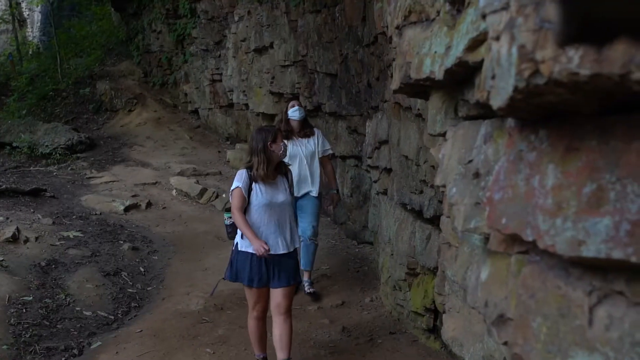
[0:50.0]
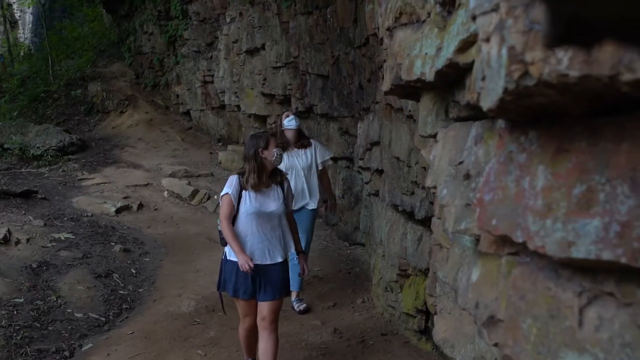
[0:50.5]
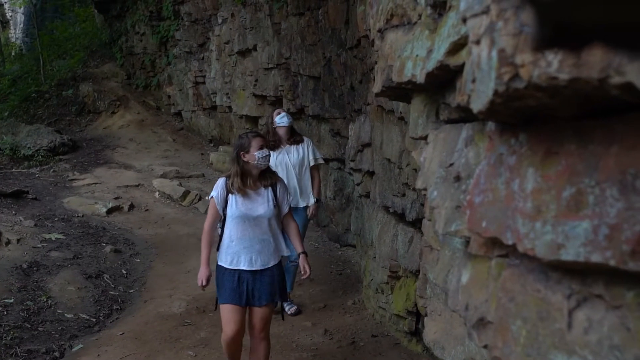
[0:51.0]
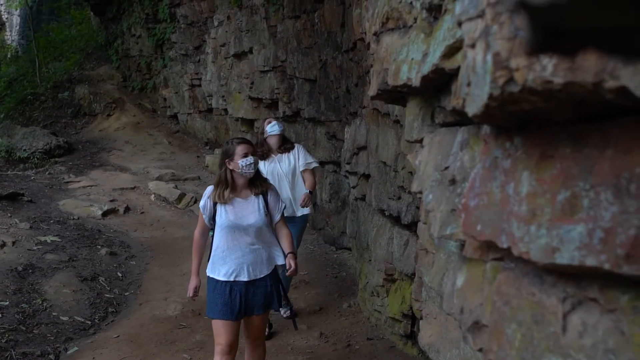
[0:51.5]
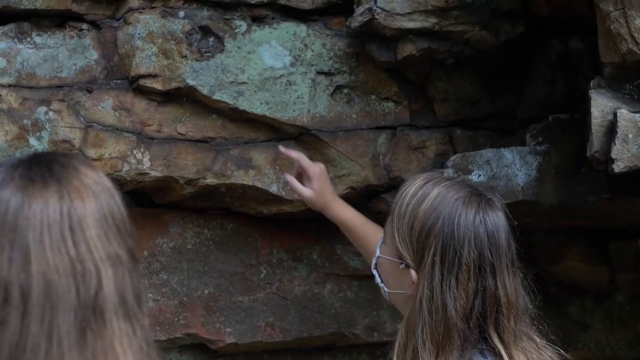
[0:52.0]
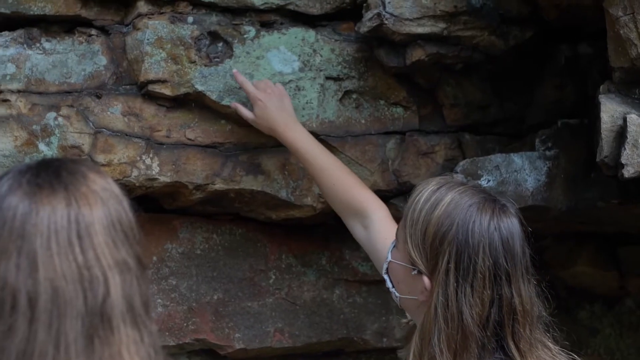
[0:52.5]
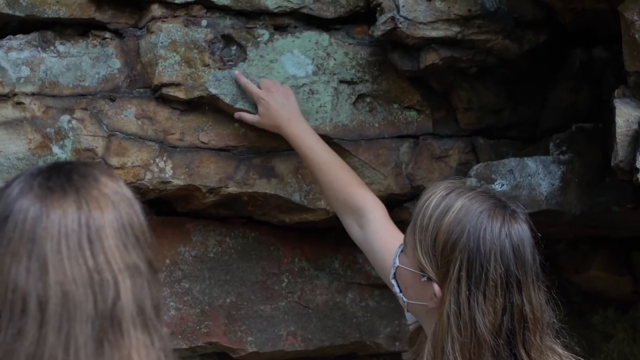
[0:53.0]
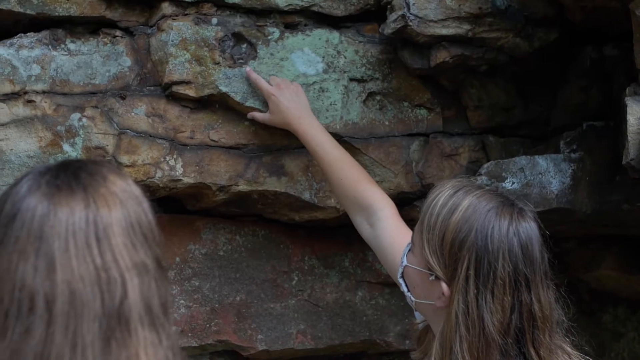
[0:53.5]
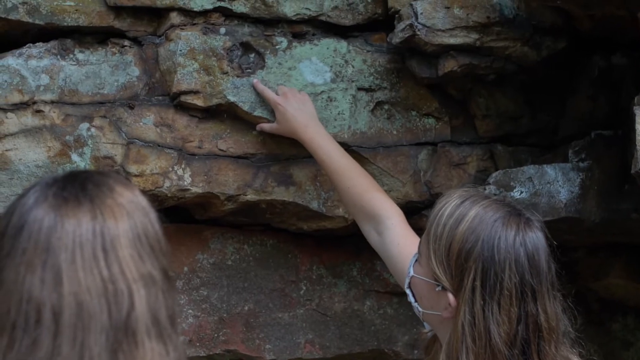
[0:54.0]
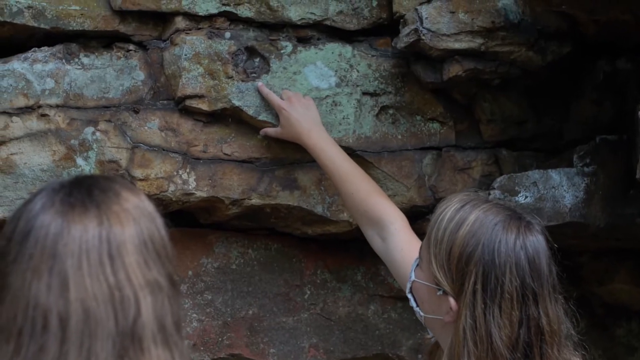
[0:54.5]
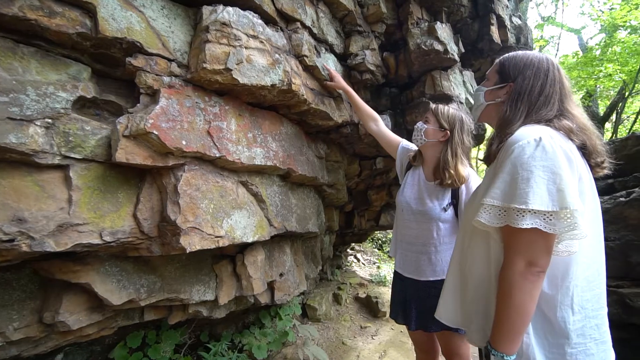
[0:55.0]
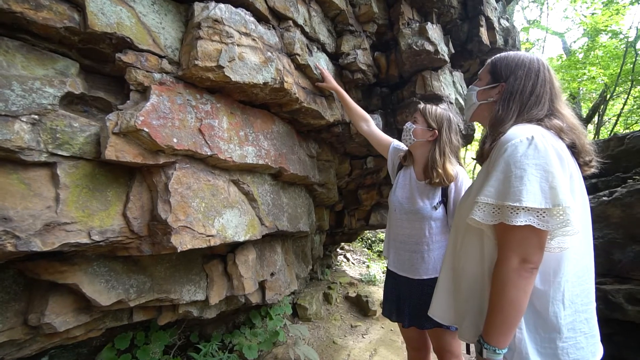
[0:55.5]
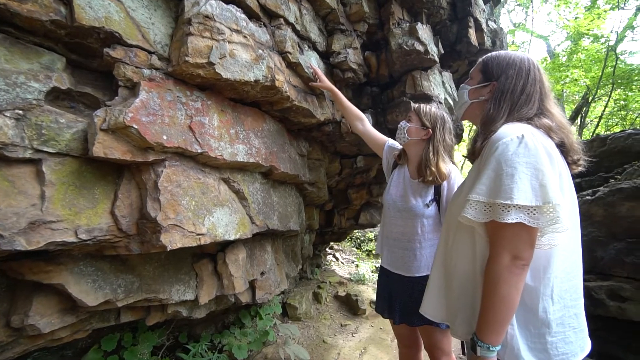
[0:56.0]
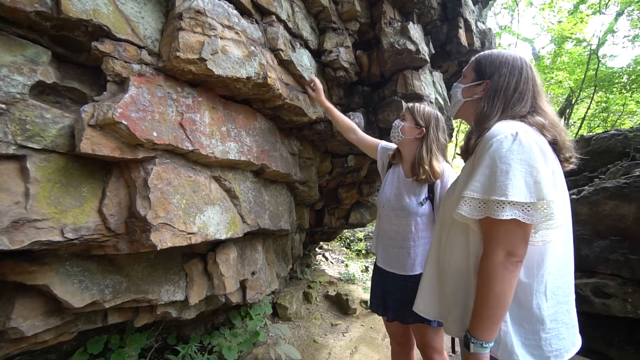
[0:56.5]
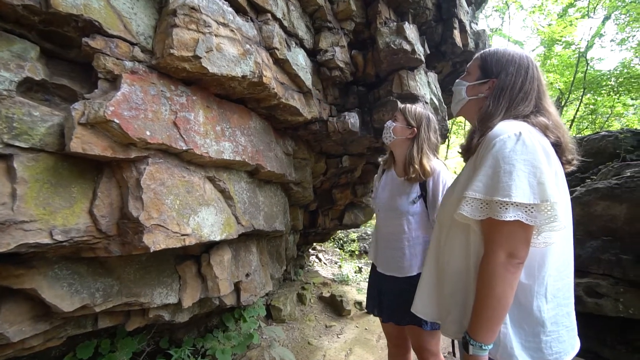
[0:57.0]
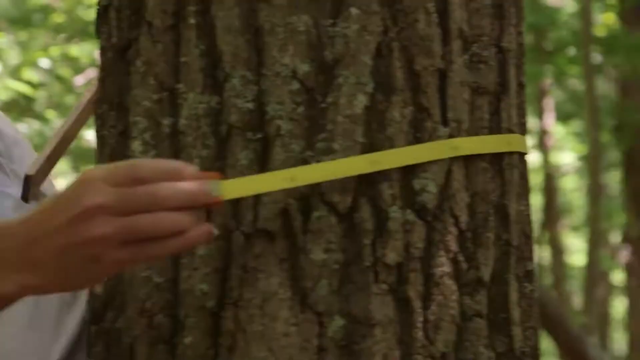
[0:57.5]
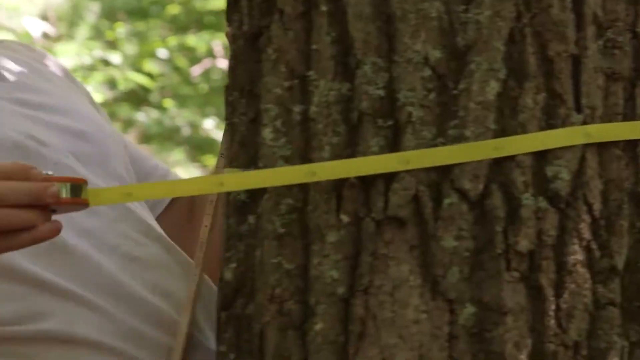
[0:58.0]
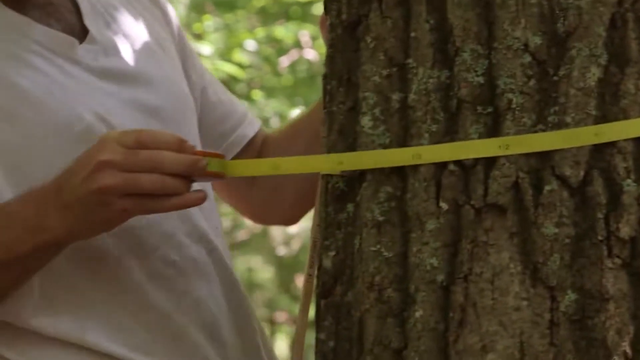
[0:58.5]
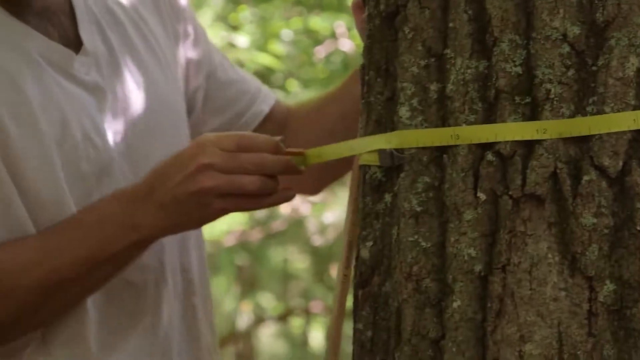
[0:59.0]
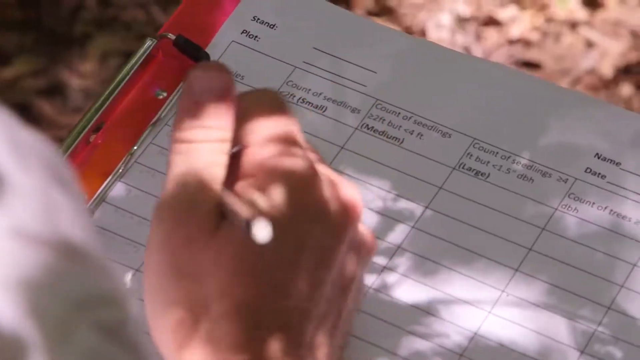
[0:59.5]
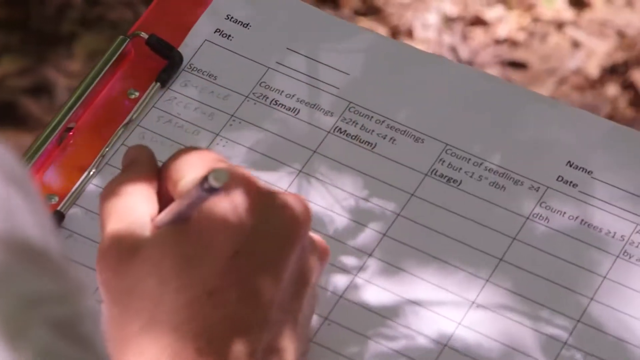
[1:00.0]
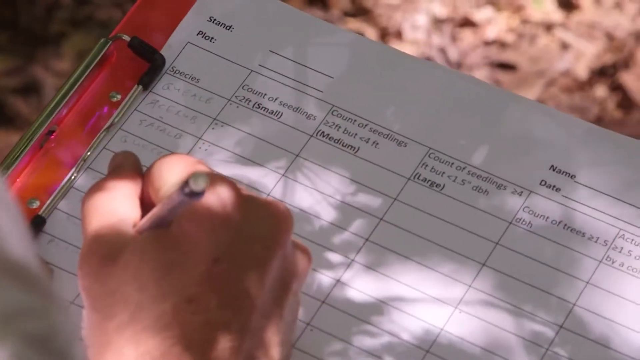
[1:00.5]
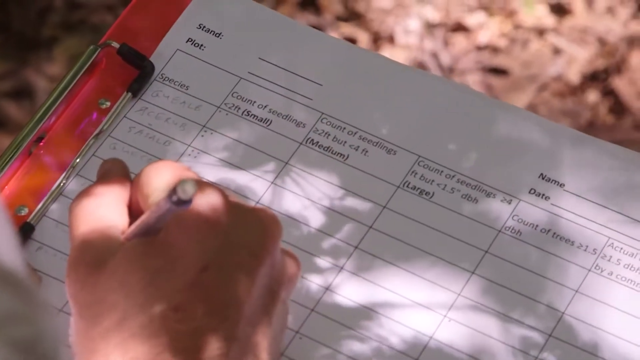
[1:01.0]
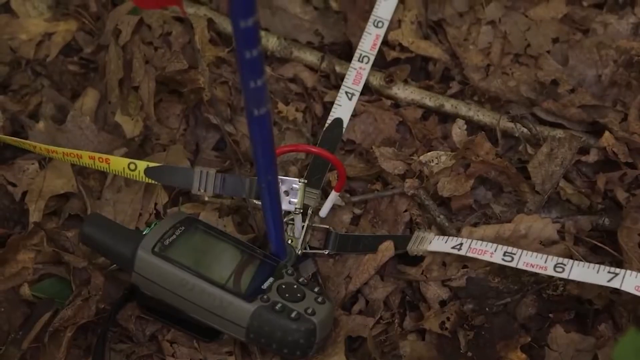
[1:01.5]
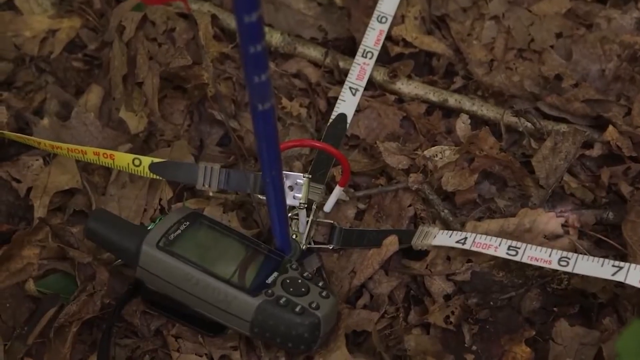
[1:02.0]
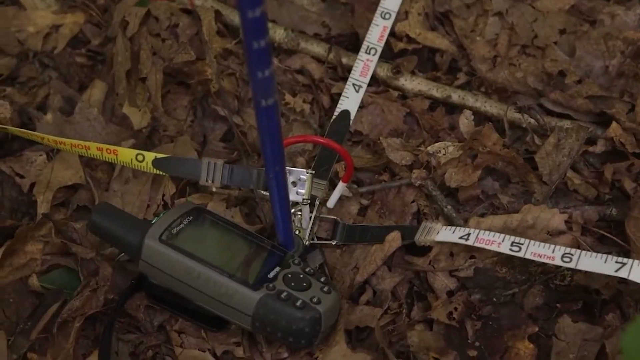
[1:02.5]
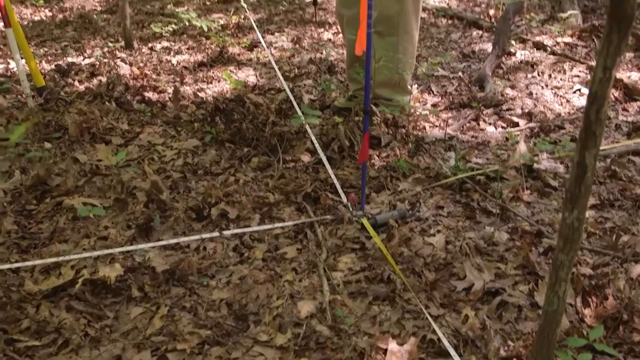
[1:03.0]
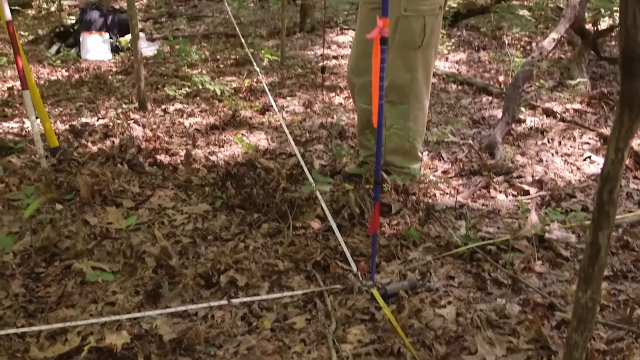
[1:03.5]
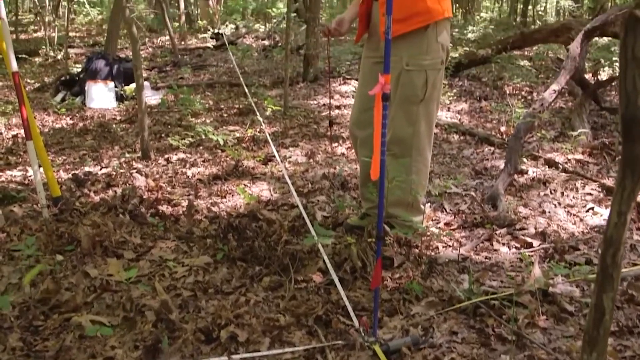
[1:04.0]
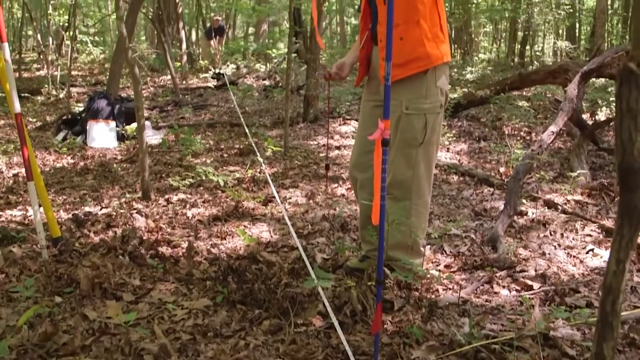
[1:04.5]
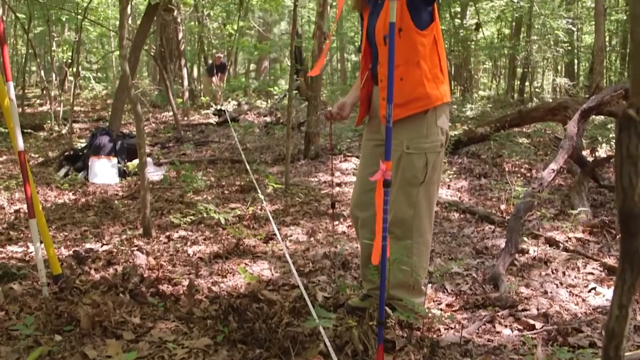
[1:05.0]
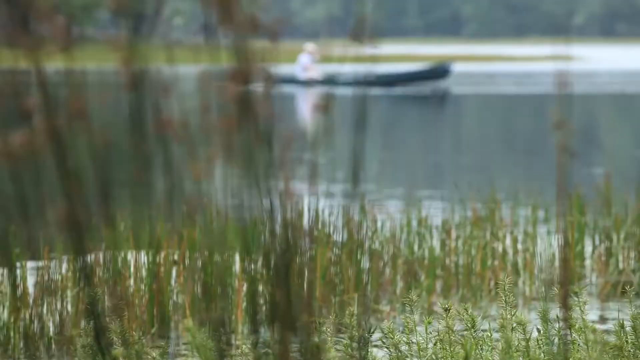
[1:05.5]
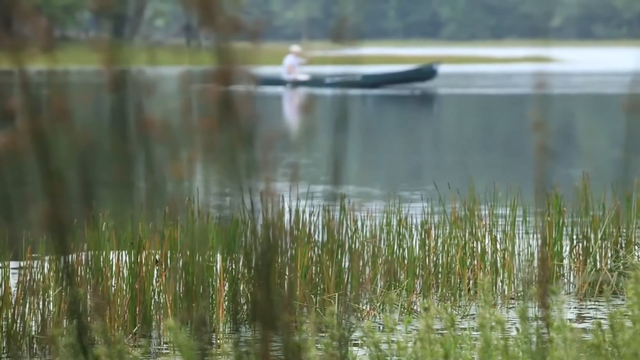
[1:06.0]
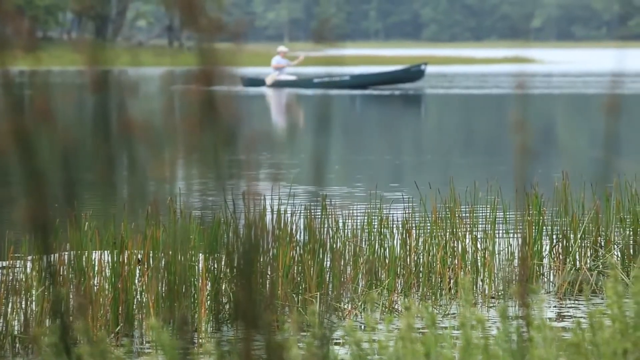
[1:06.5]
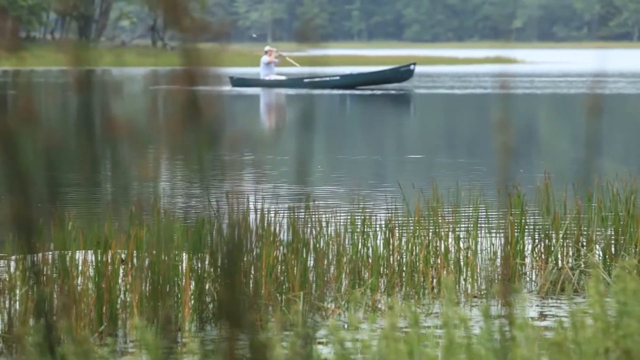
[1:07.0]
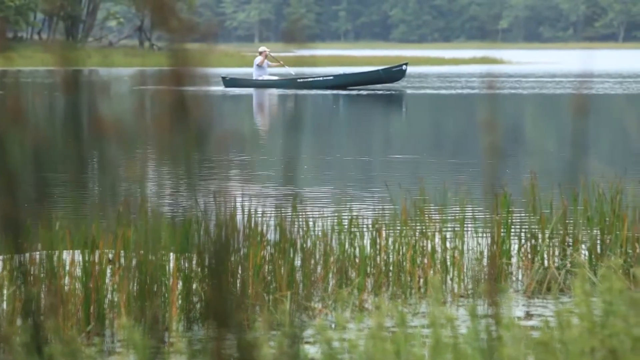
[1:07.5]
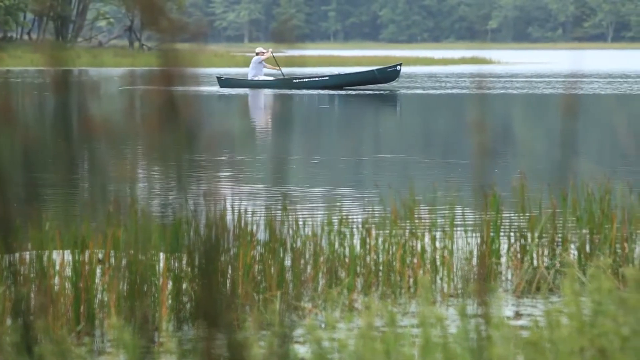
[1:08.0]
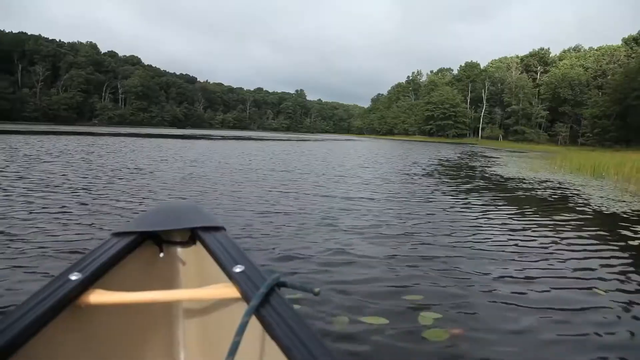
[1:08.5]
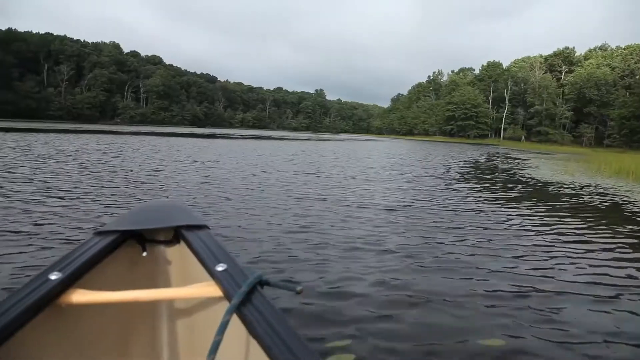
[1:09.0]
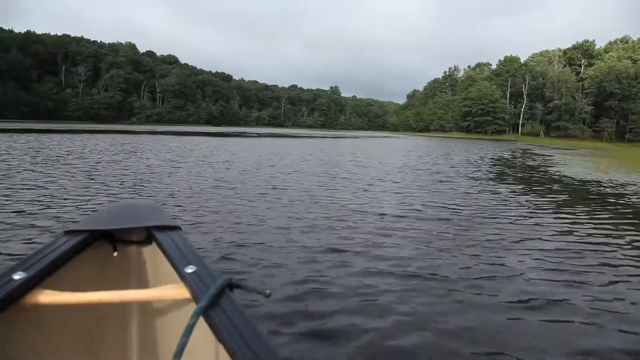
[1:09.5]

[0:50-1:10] The two blonde women walk down the trail, looking at rocky wall formations, and point at the rocks, which have some green on them. One of them seems to be speaking; they are wearing face masks and are moving. Next the women measure trees with yellow tape measures and write the measurements on paper they keep inside a red folder. The tape measures and a device with a screen, some buttons and an antenna are on the floor on top of brown leaves, as a woman wearing large beige pants and an orange vest appears on screen. The video cuts to a man in a light blue shirt and a white cap paddling a kayak on the lake, followed by a POV shot of the water.